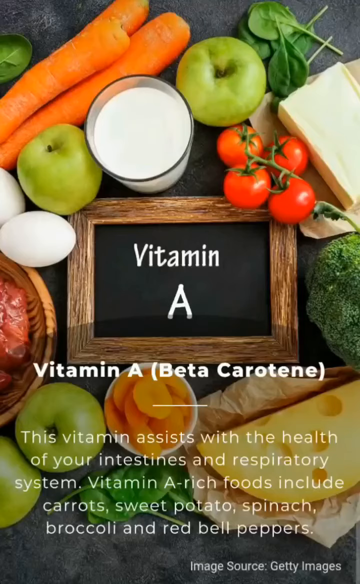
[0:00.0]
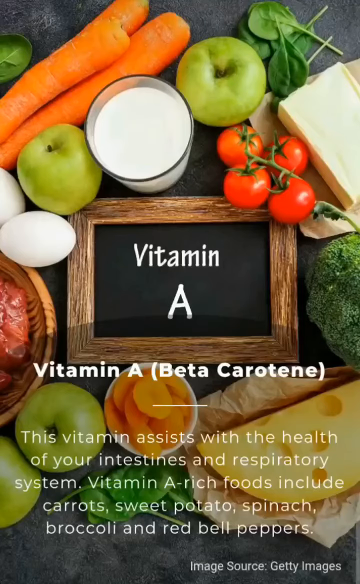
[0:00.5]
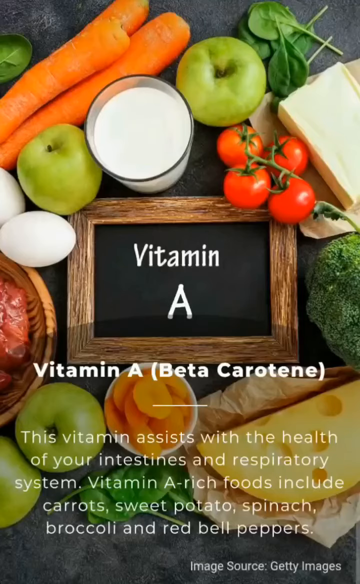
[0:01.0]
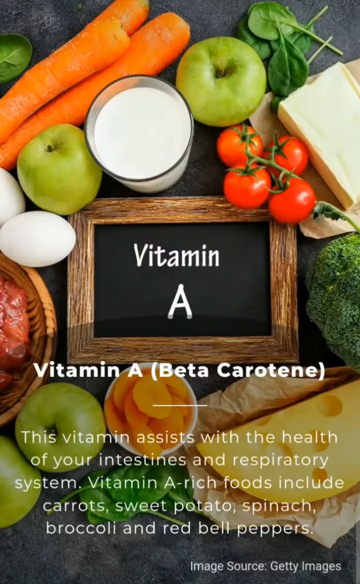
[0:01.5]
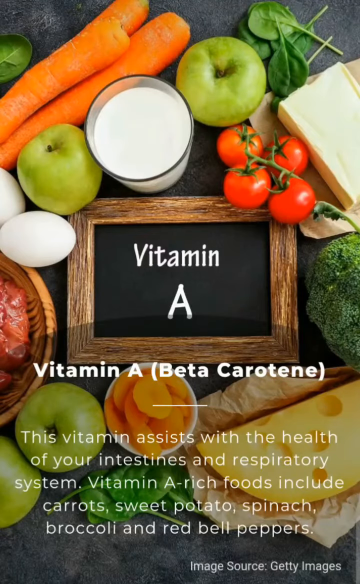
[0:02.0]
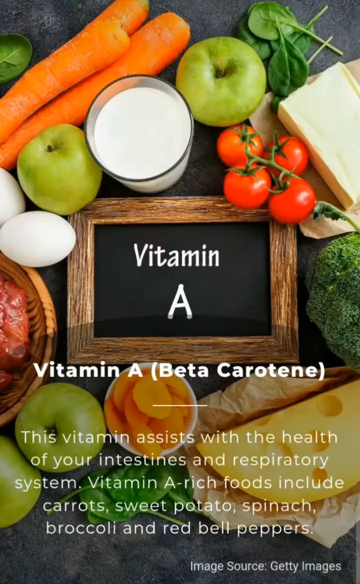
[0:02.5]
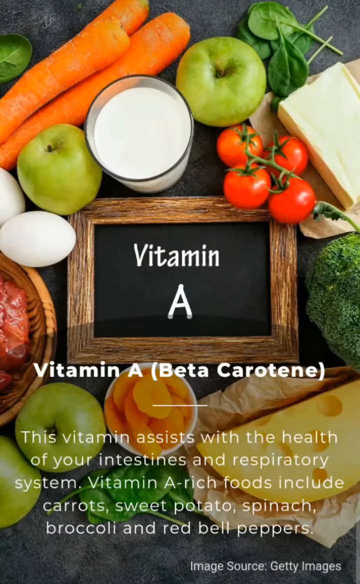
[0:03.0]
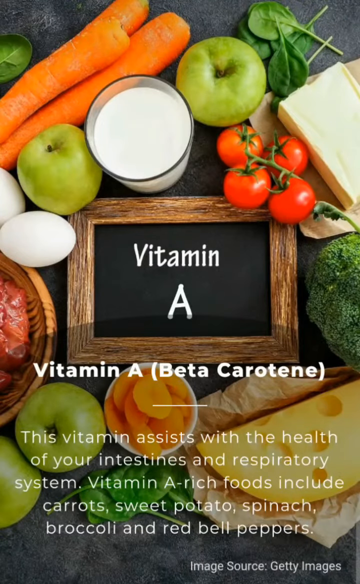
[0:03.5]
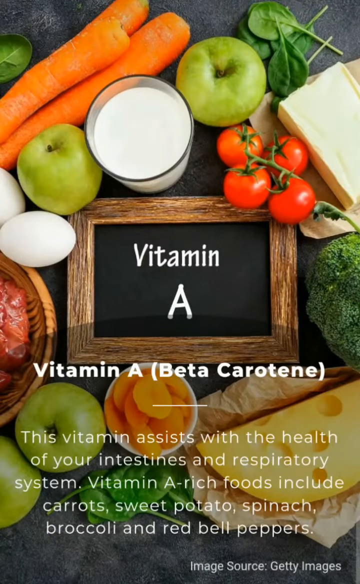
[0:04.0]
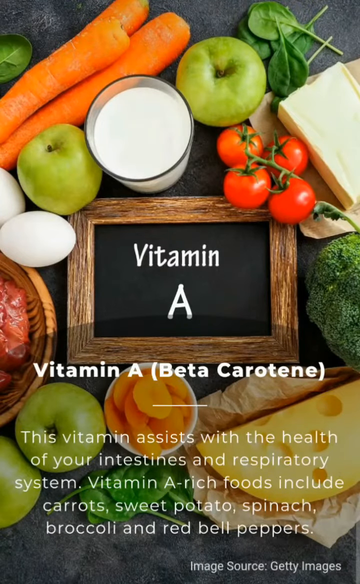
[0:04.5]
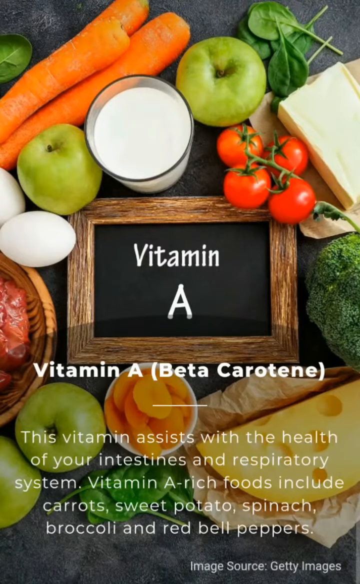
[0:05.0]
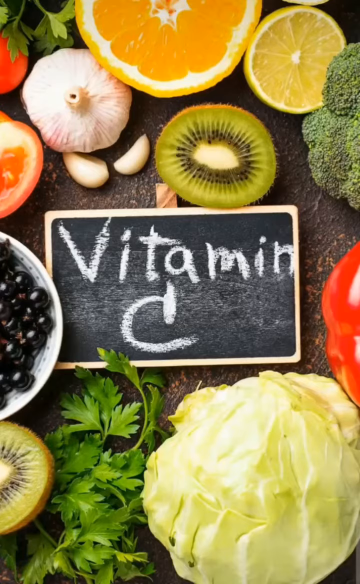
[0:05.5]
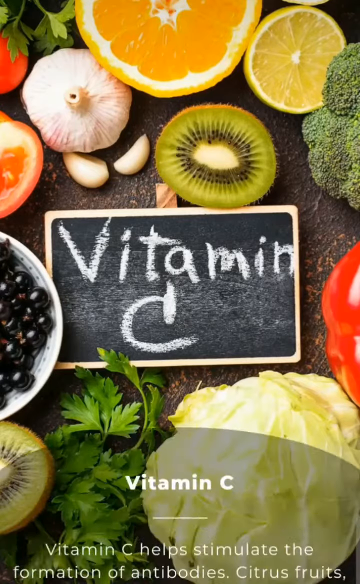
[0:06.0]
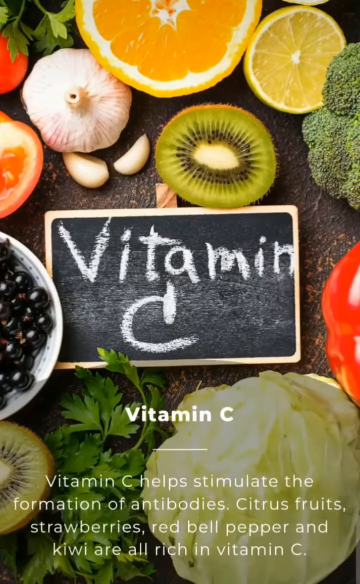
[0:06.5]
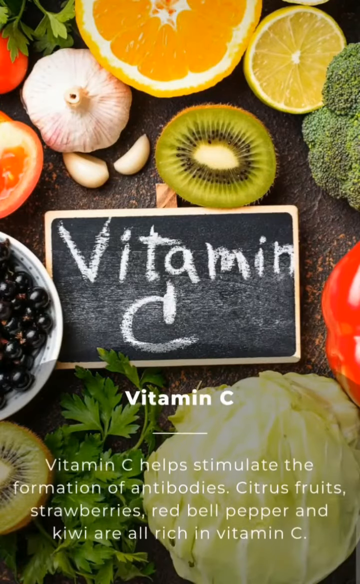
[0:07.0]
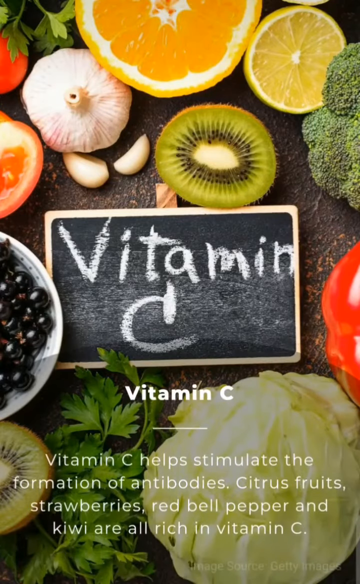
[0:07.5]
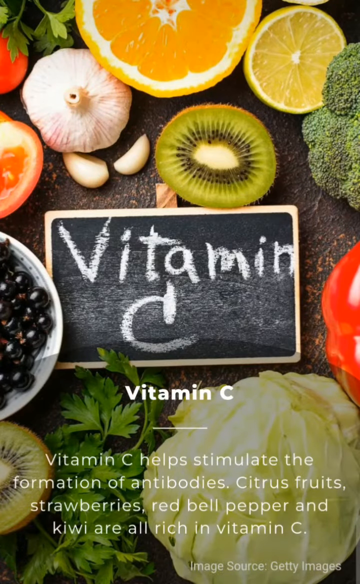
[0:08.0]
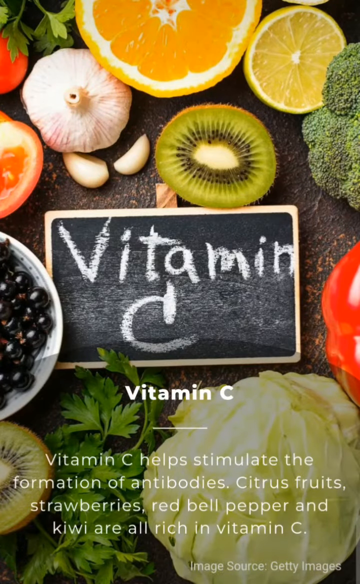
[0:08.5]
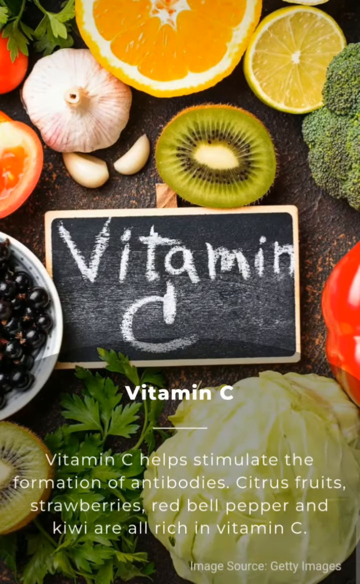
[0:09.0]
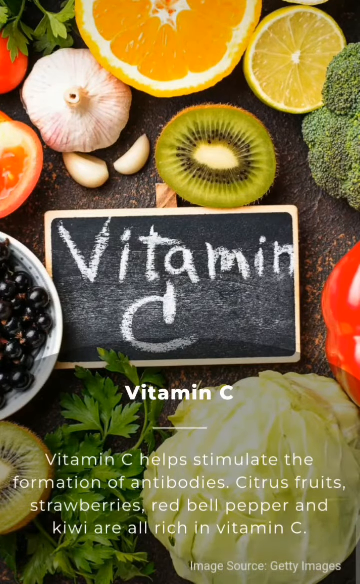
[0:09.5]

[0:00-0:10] The video appears set to go through different vitamins, starting with vitamin A. The text reads "vitamin A, beta carotene" and says it "assists with the health of your intestines and respiratory system. Vitamin A rich foods include carrots, sweet potatoes, spinach, broccoli, and red bell peppers." On a board is written "vitamin A", surrounded by a number of items that are apparently good sources of vitamin A: apples, carrots, tomatoes, and some cheese. The video then moves on to vitamin C, with text saying it "helps stimulate the formation of antibodies" and that "citrus fruits, strawberries, red bell pepper, and kiwi are all rich in it."